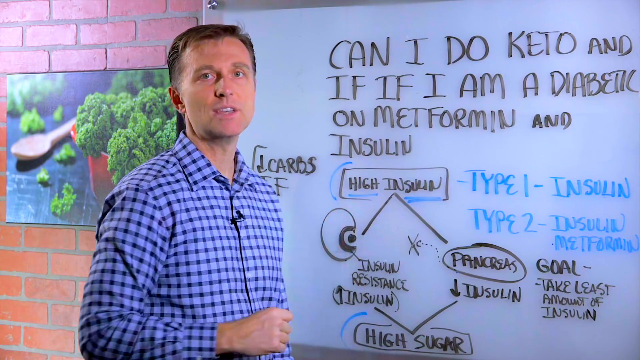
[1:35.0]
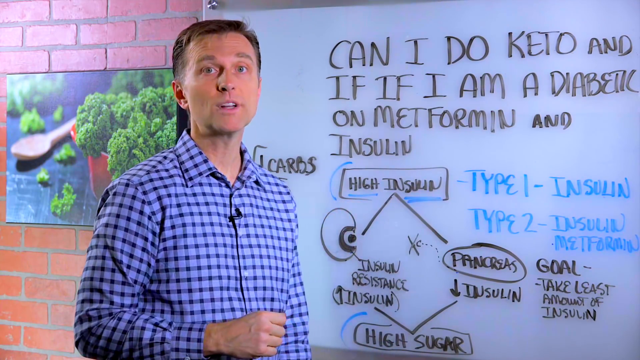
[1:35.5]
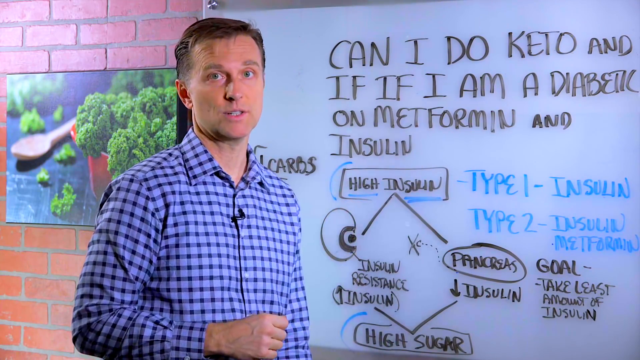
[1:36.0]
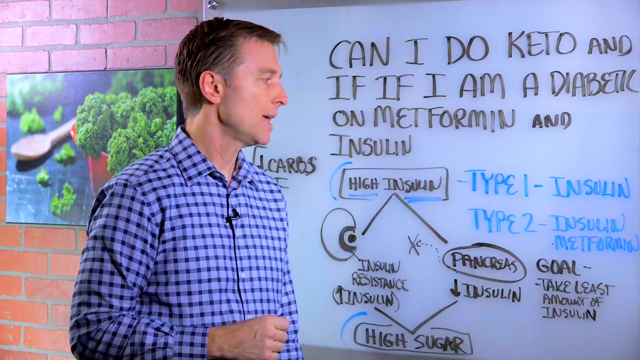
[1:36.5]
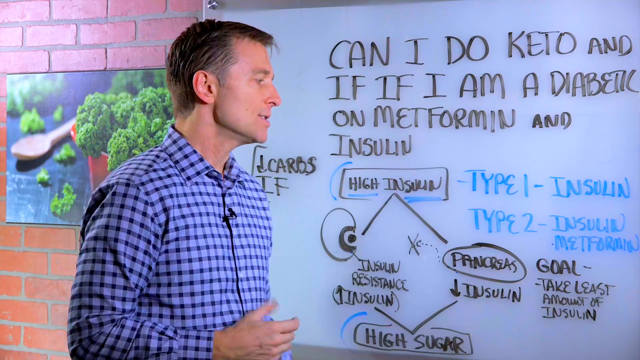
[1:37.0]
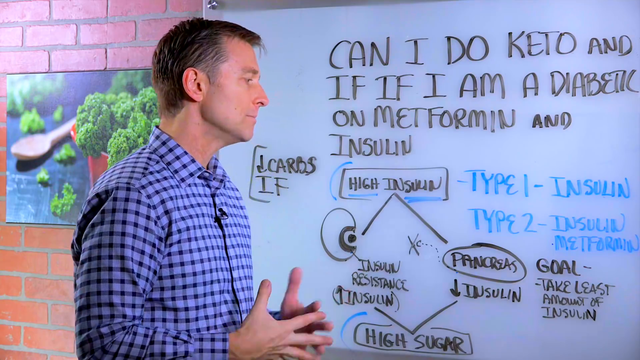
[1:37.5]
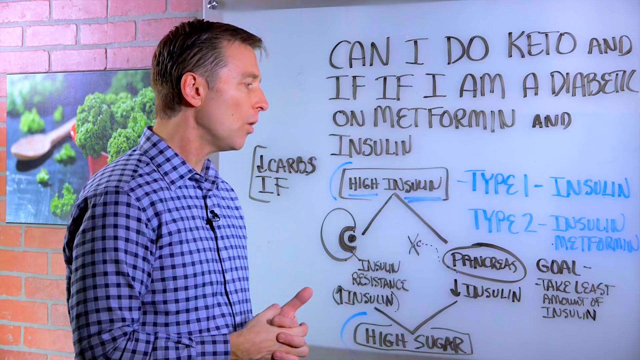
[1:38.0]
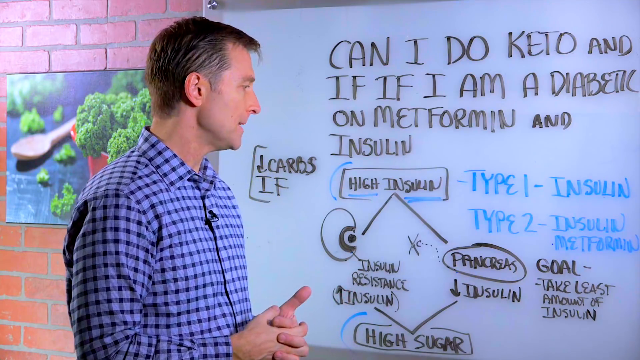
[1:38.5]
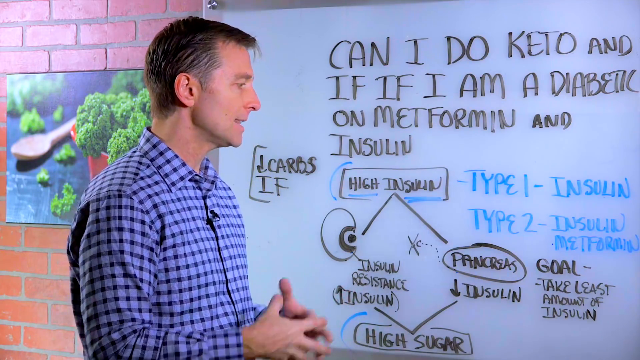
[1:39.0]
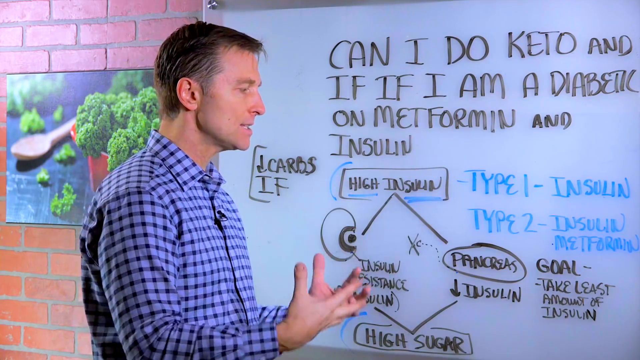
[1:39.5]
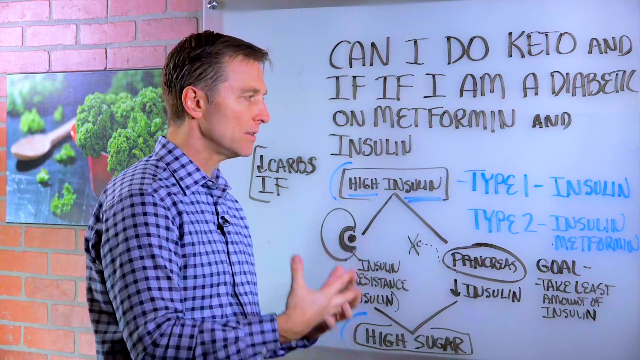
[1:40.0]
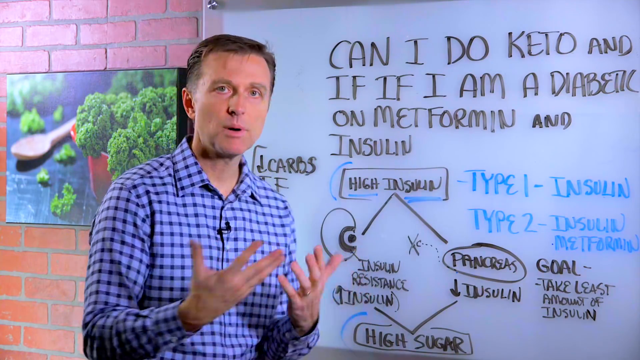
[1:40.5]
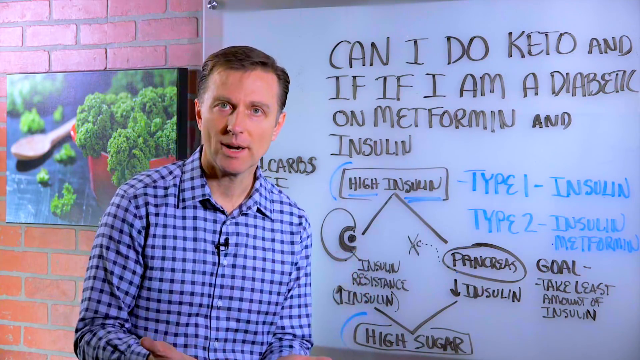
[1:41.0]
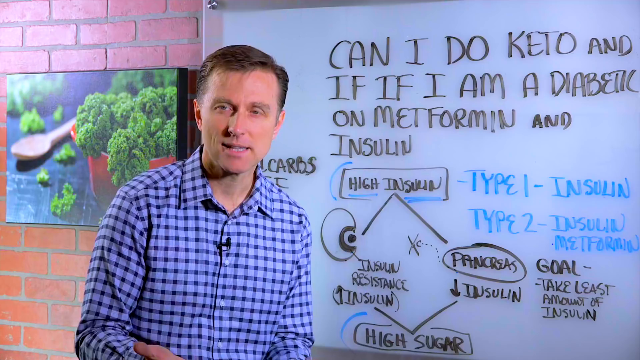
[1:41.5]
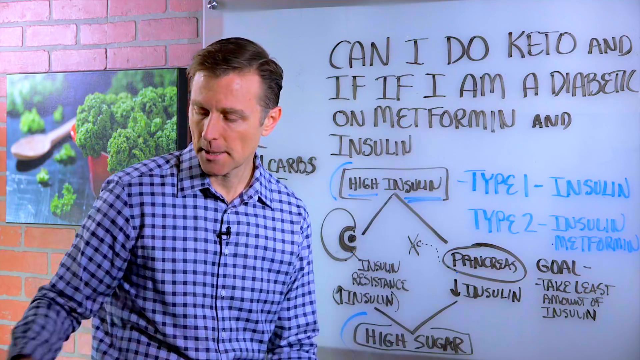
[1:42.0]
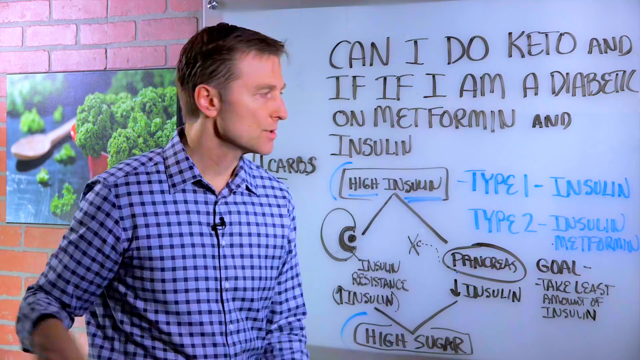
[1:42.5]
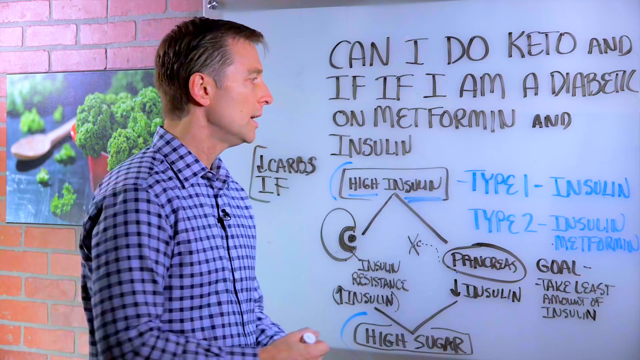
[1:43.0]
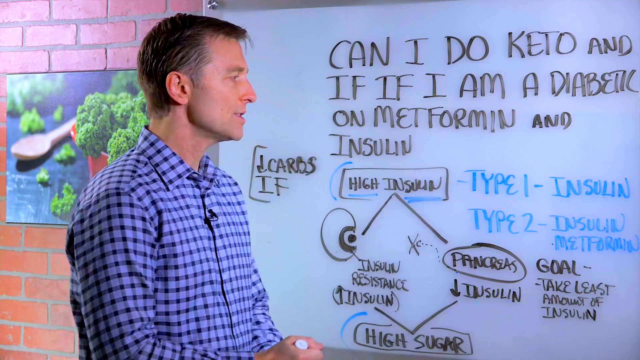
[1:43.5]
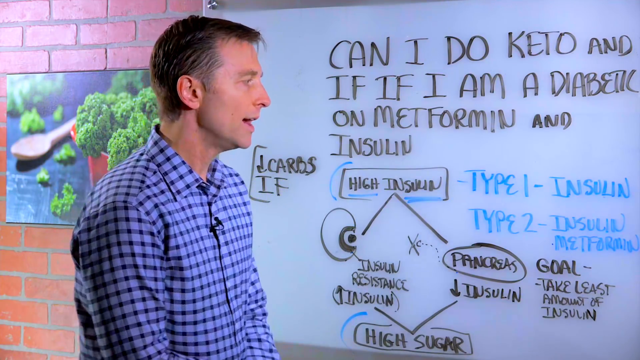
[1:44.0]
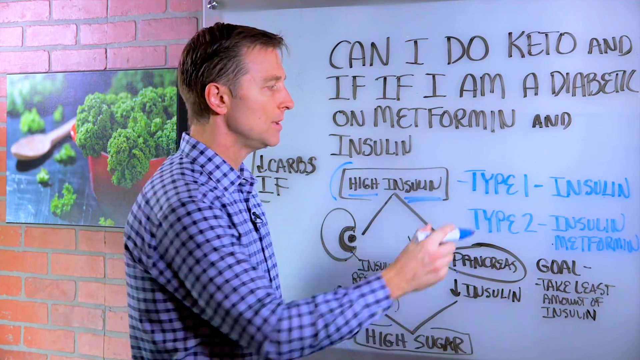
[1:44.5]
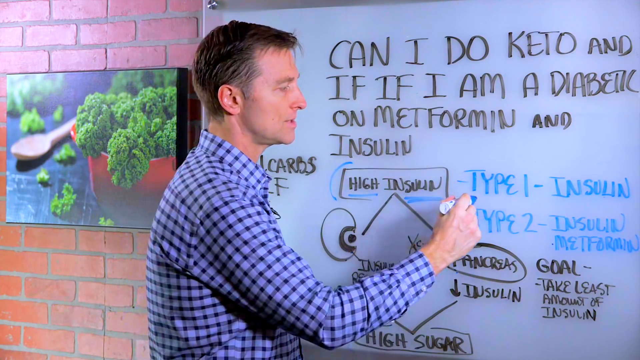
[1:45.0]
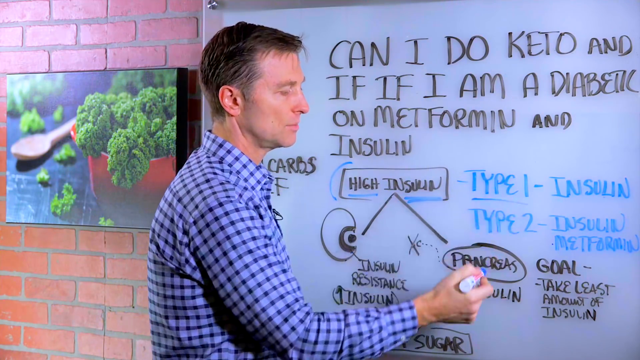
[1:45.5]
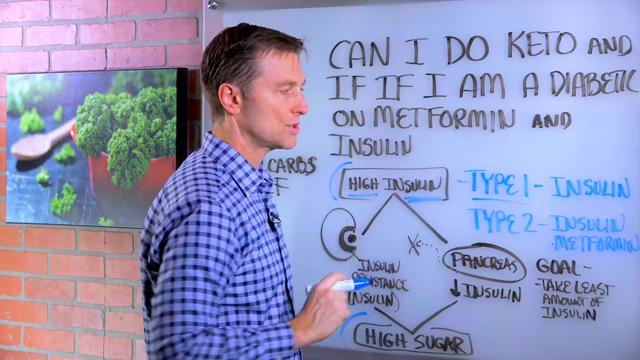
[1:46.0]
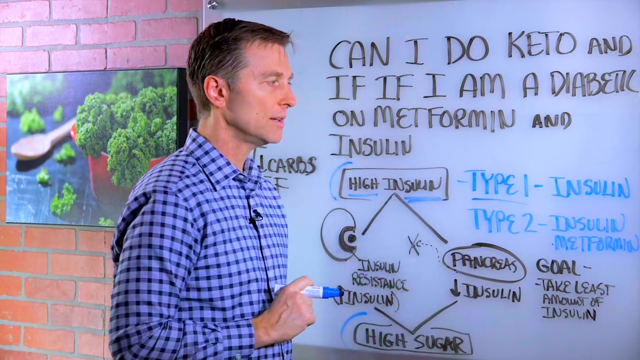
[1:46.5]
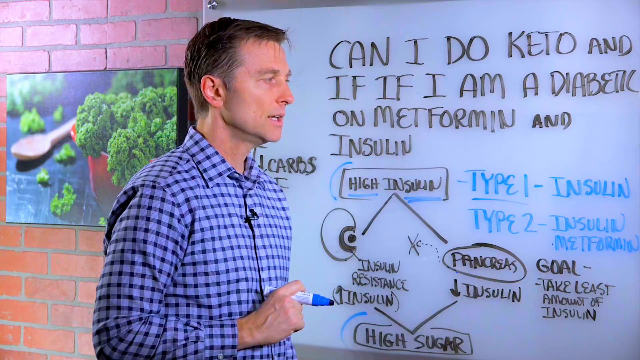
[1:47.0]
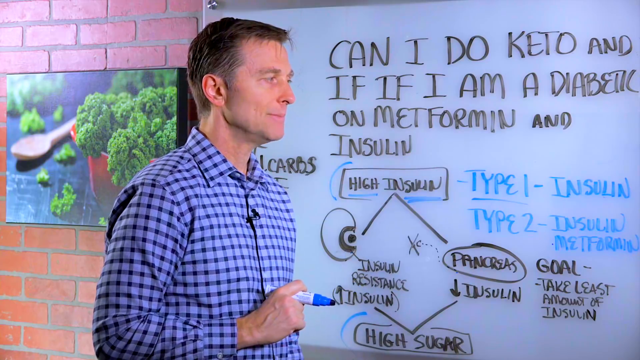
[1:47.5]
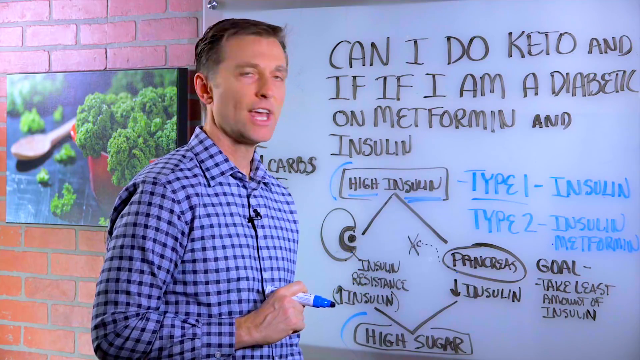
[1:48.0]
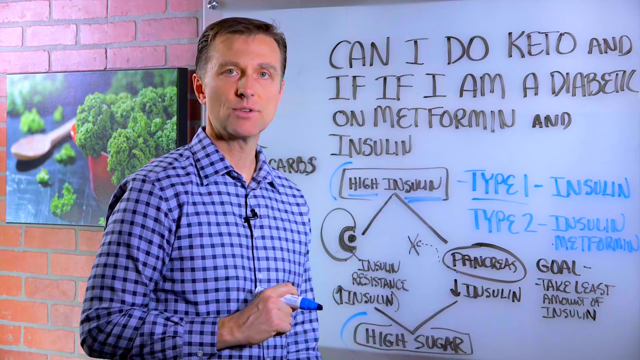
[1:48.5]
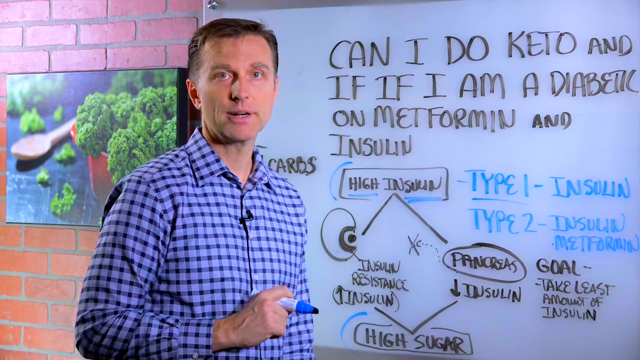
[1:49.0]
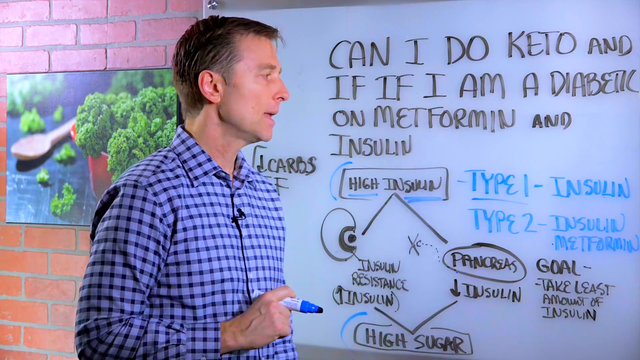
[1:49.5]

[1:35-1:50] The man keeps talking with his hands, at first kind of putting them together as if holding his hands together. He picks up the blue marker again, points to type 1, and underlines type 1 in blue on the whiteboard. He appears to read from the whiteboard about type 1, then looks back at the camera. He keeps holding the marker as if he is going to write or underline something else.